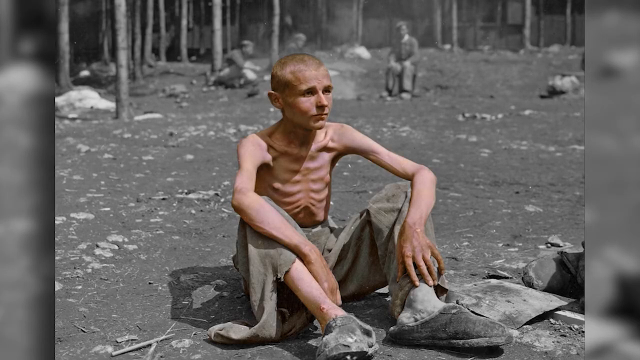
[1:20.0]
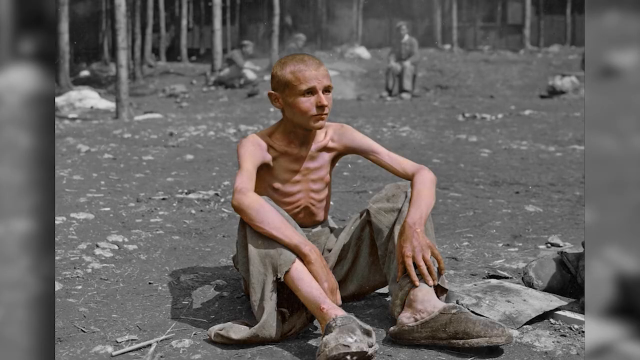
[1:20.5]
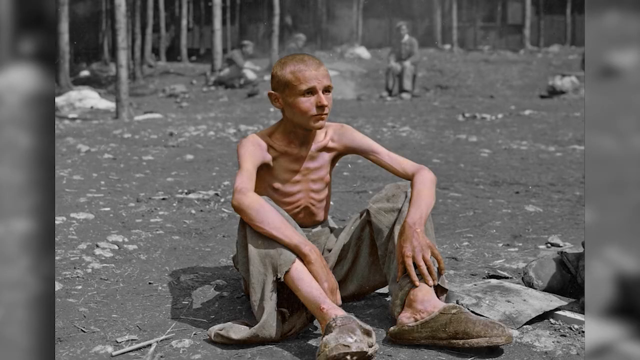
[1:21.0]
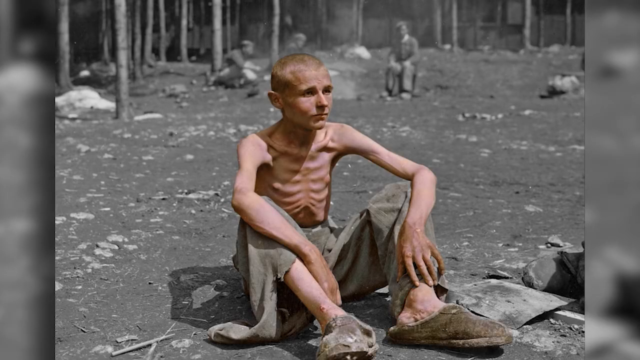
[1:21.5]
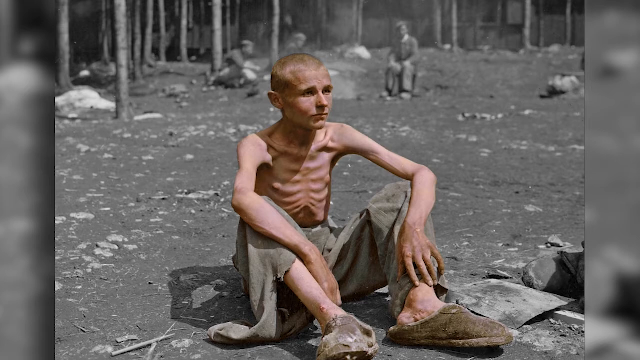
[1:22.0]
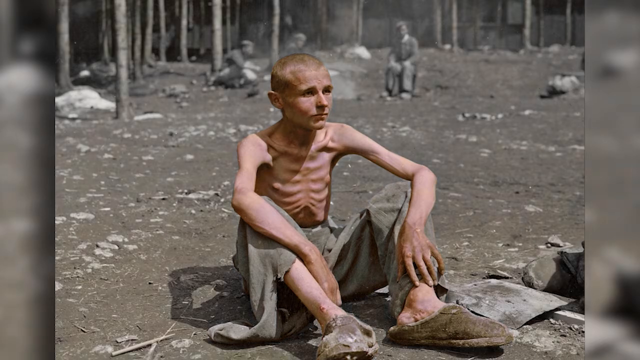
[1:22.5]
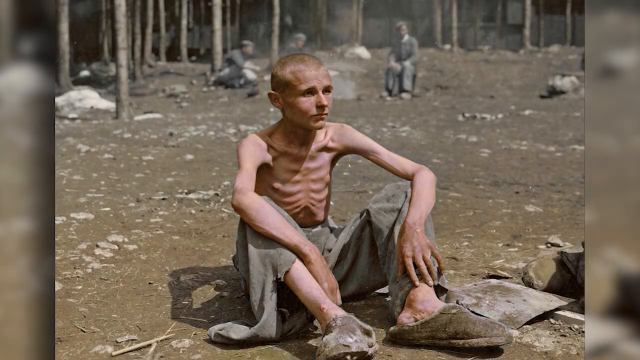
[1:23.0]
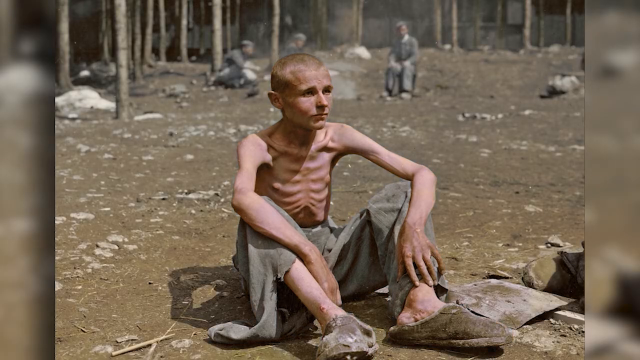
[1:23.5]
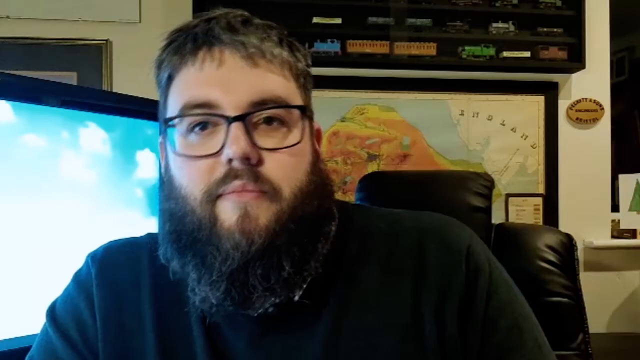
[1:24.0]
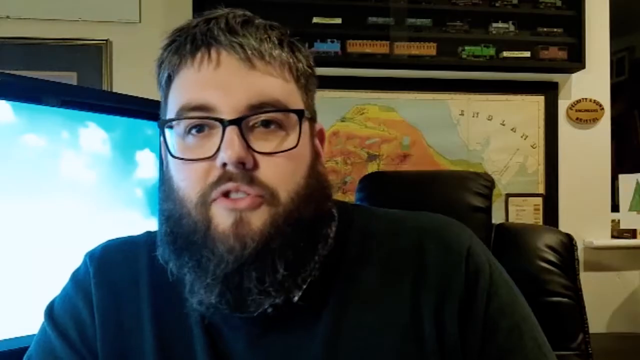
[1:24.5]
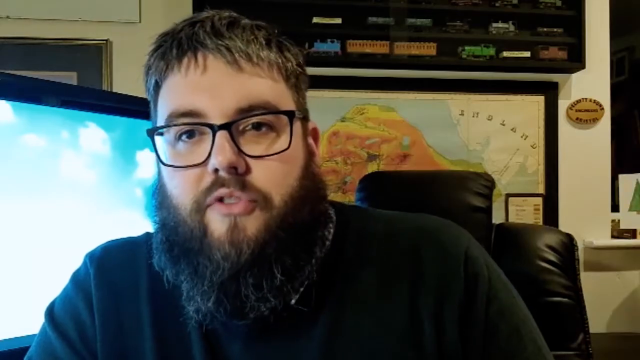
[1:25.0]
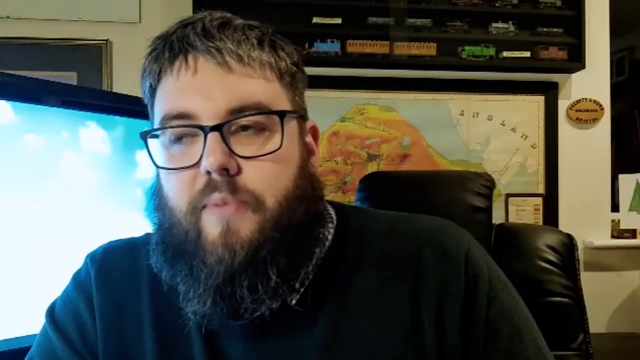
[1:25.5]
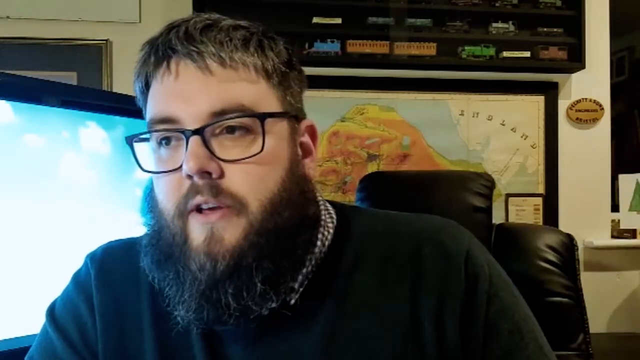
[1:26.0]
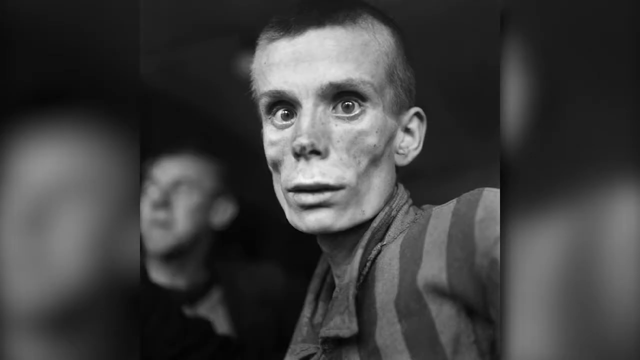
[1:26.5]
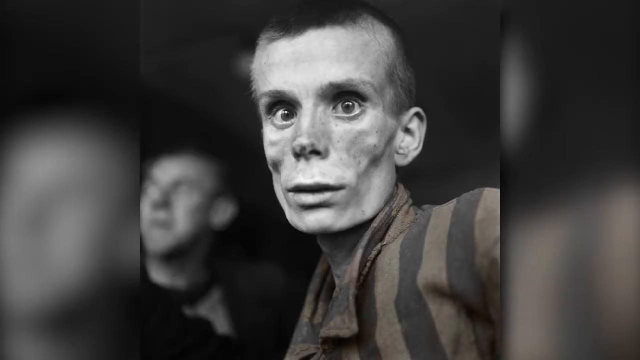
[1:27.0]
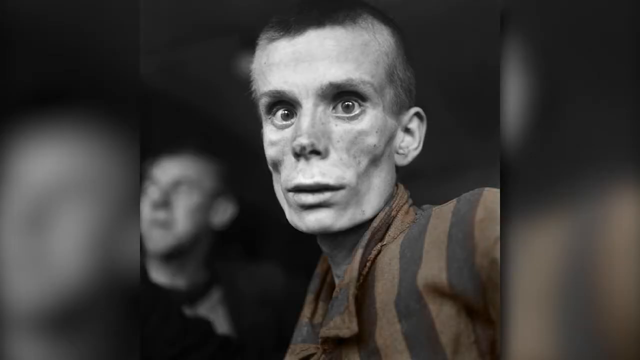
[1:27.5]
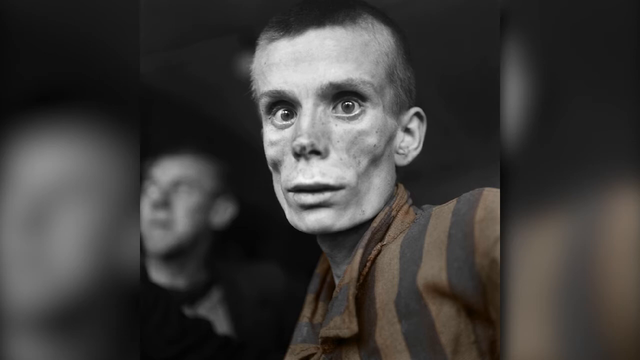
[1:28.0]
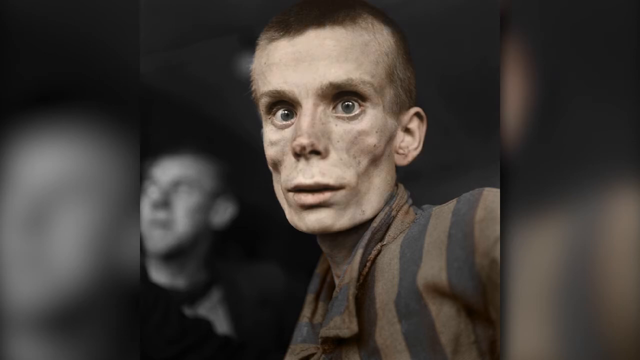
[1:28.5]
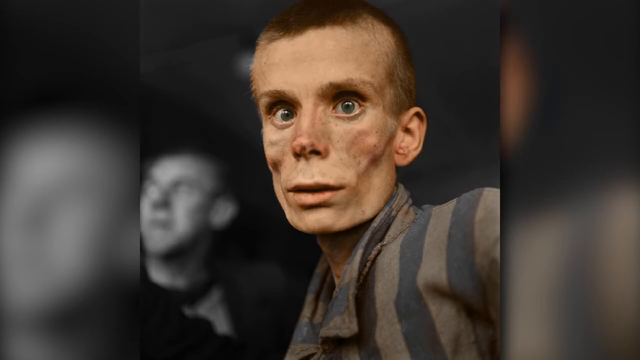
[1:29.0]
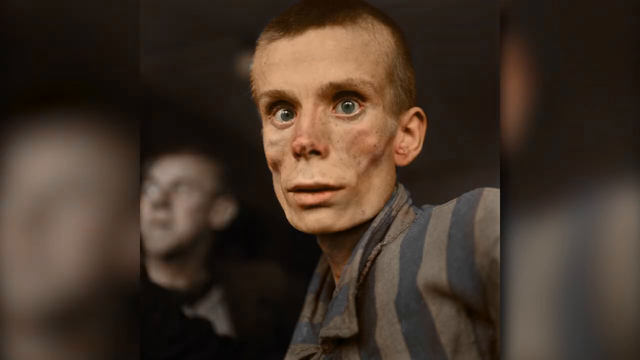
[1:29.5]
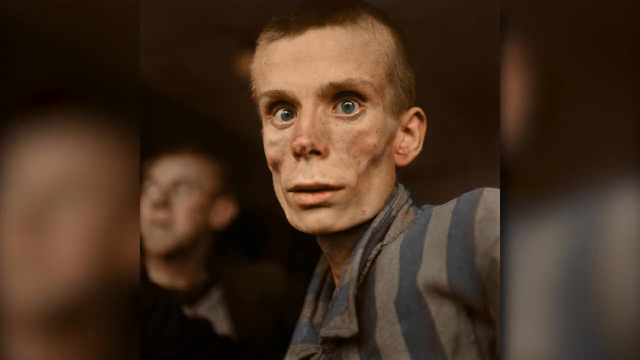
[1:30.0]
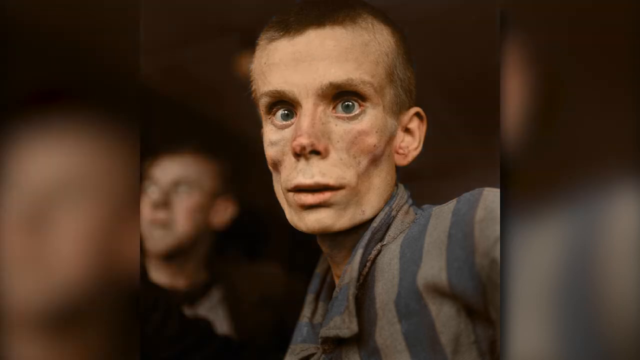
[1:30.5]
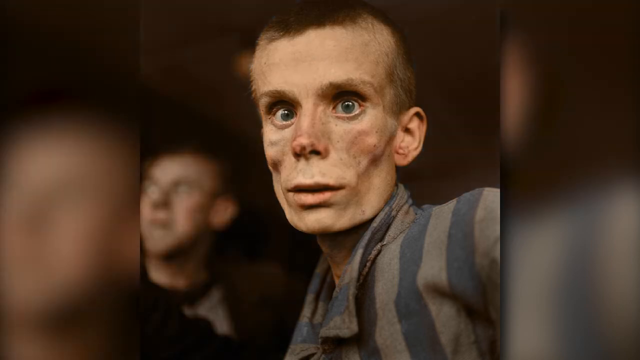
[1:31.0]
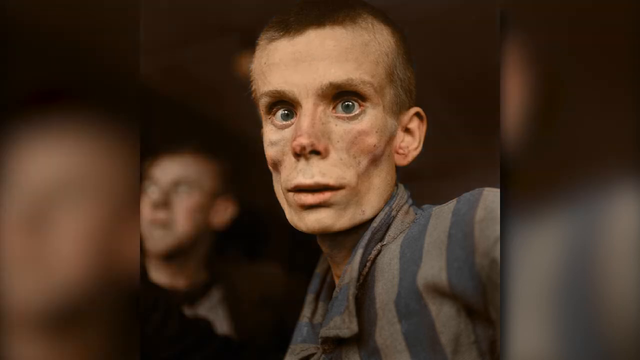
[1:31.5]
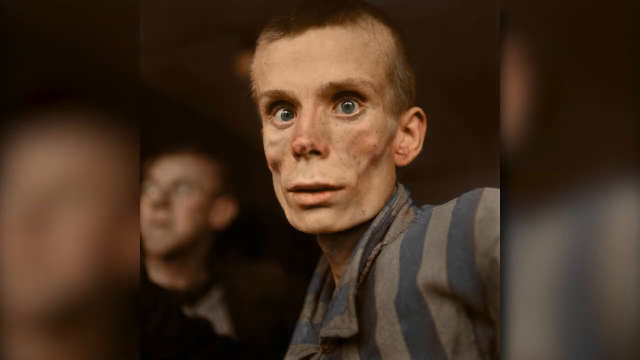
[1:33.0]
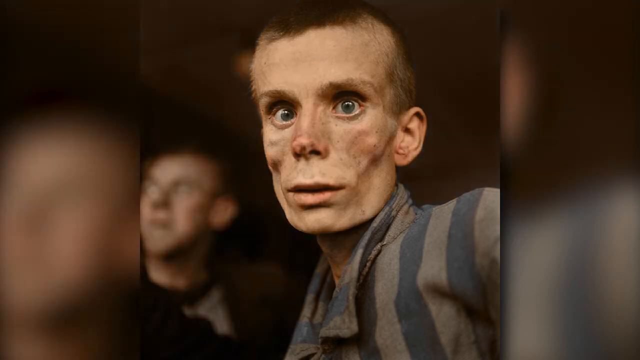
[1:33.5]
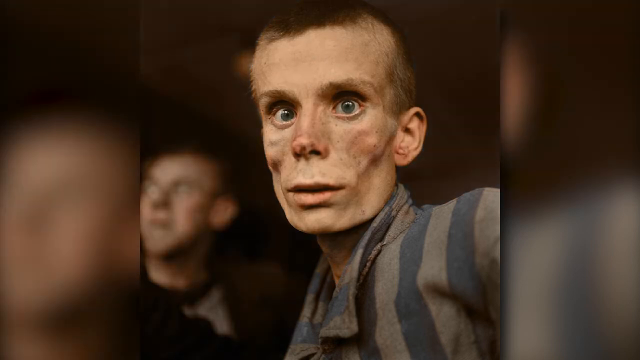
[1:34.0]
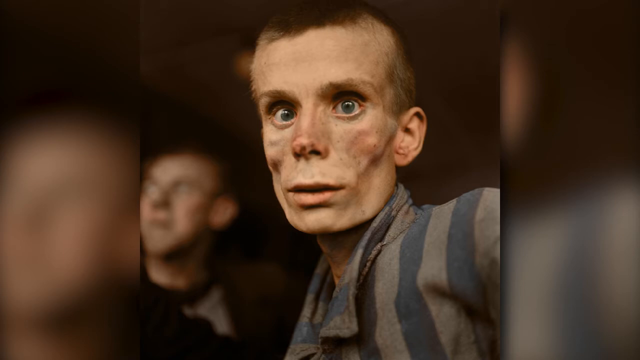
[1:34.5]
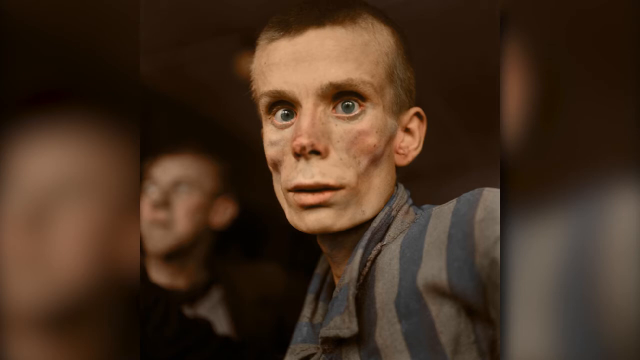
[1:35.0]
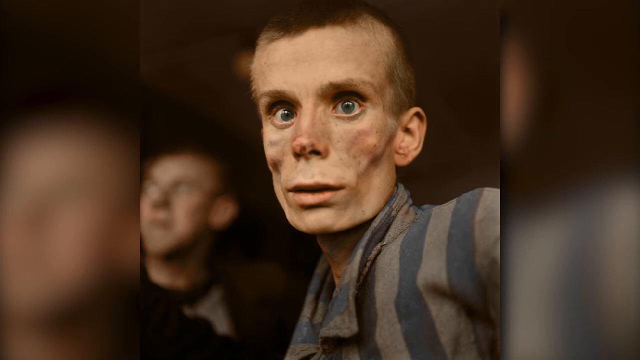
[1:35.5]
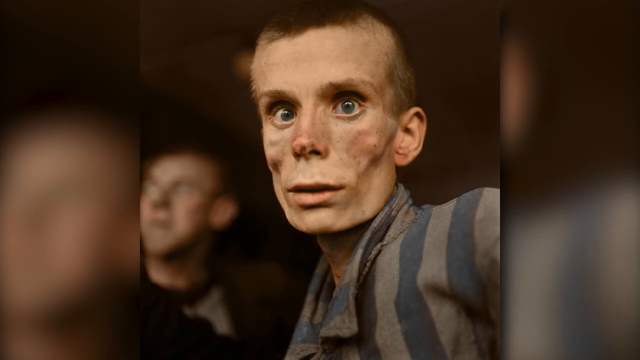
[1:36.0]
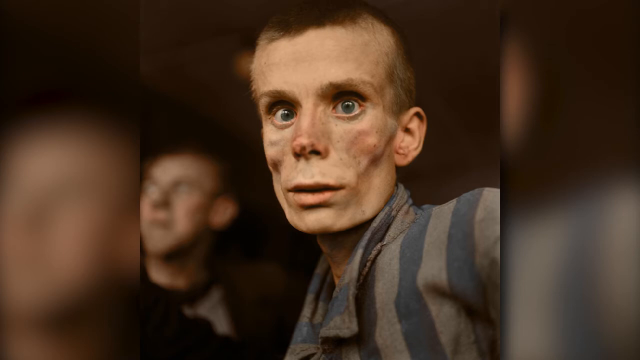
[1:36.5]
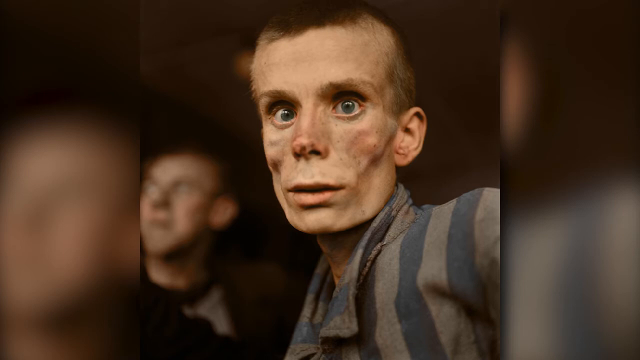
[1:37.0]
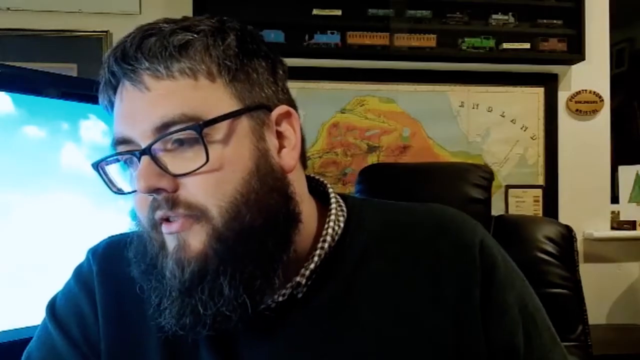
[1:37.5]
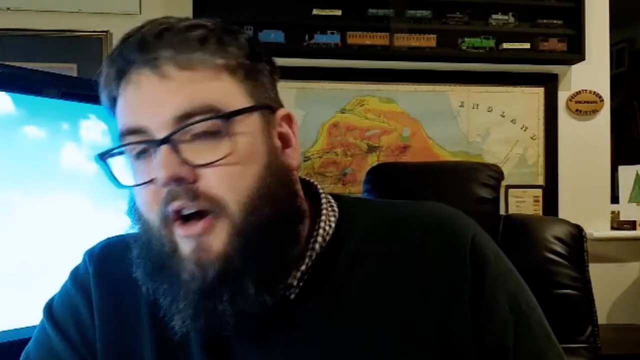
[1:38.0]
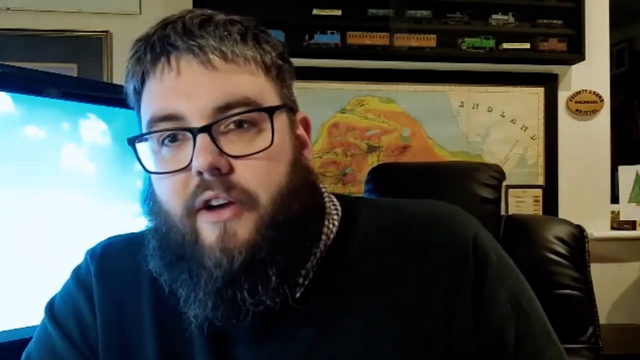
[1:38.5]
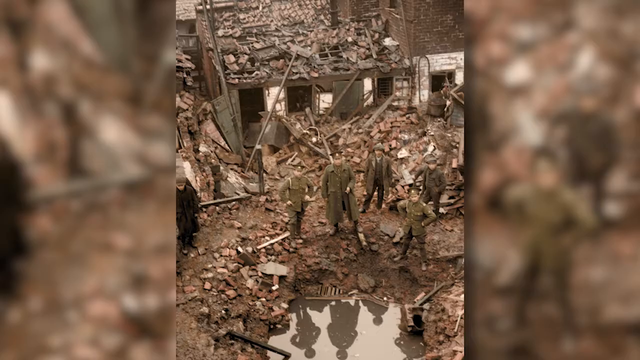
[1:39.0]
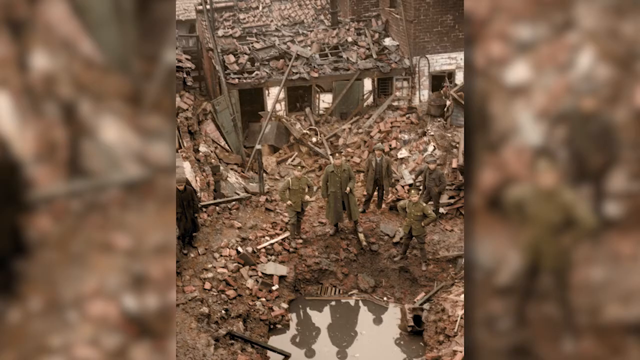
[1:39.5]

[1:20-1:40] The emaciated person is shown, then the man talking by the computer screen. A black-and-white picture shows somebody else, possibly a woman, with a very bony structure and one eye not set straight, and somebody behind. It turns to color, showing a white person in a blue and gray striped shirt whose gender remains unclear. The video returns to the man with the beard and glasses talking. Next is what looks like a bombed area in slight color, with what look like soldiers wearing green and, behind them, a destroyed building like a house, with a lot of brick and wood debris. The emaciated person is shown. Behind the man speaking is the map with a black border, and the walls are a yellowish white. The picture of the person, man or woman, who may be emaciated appears.